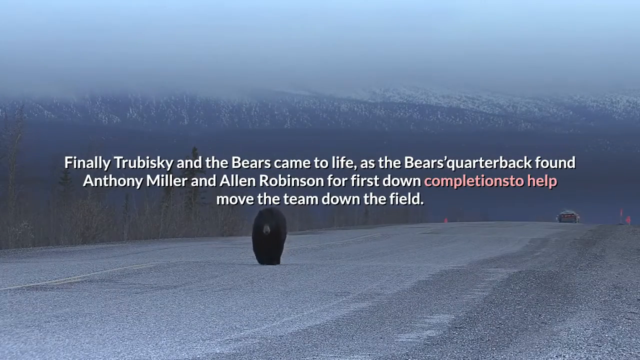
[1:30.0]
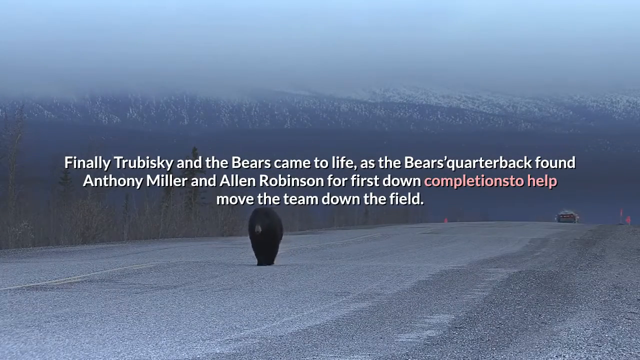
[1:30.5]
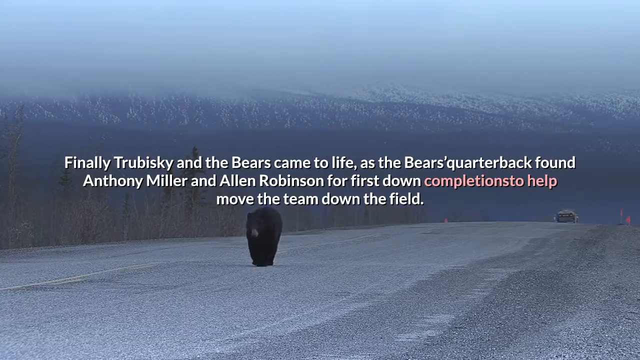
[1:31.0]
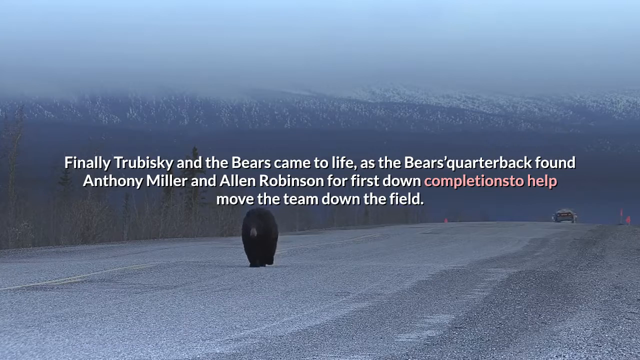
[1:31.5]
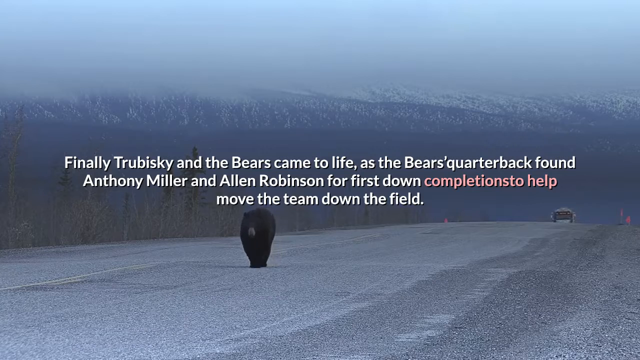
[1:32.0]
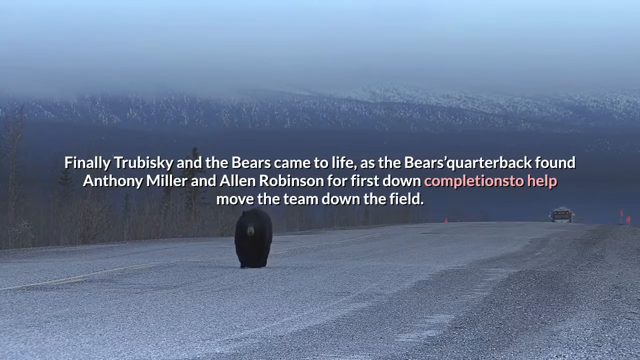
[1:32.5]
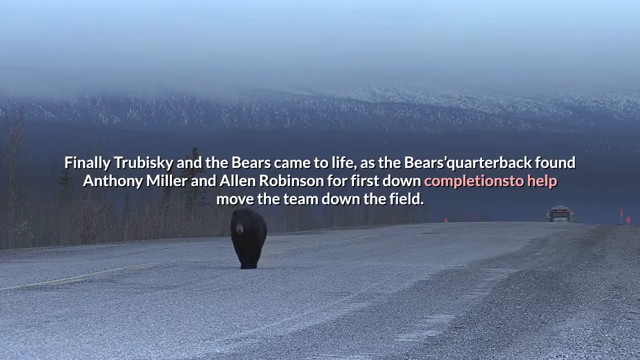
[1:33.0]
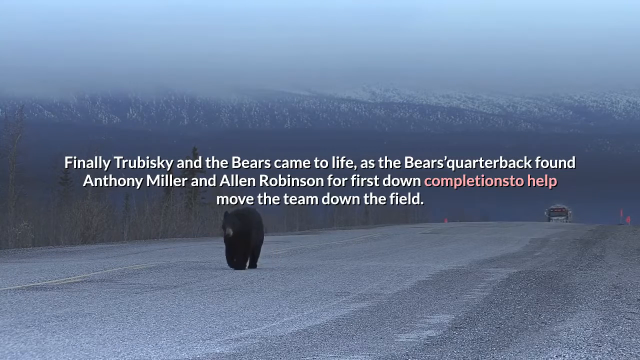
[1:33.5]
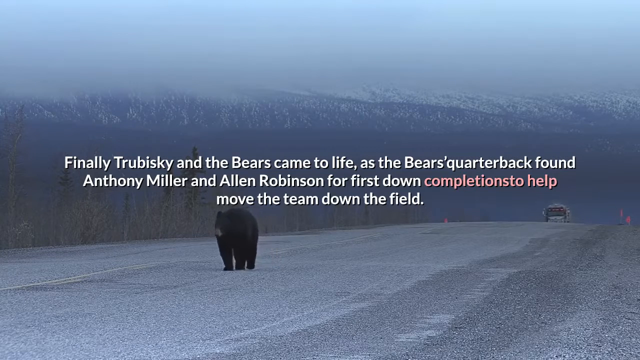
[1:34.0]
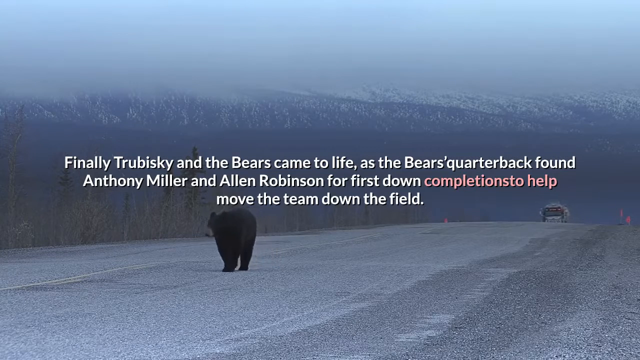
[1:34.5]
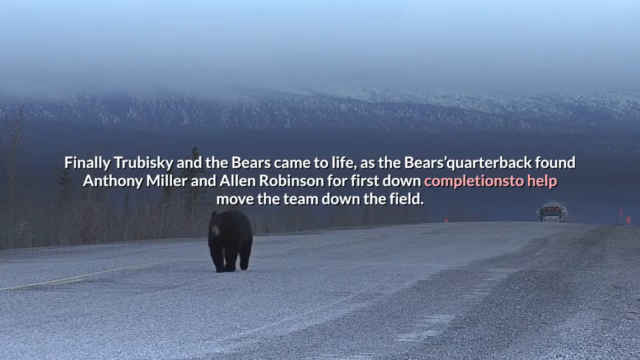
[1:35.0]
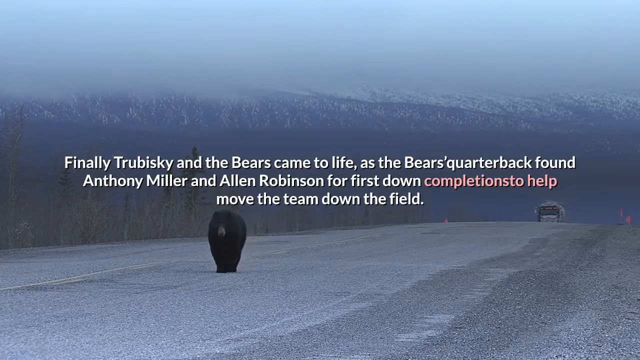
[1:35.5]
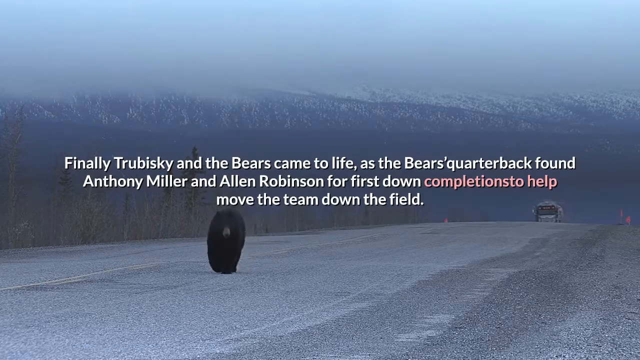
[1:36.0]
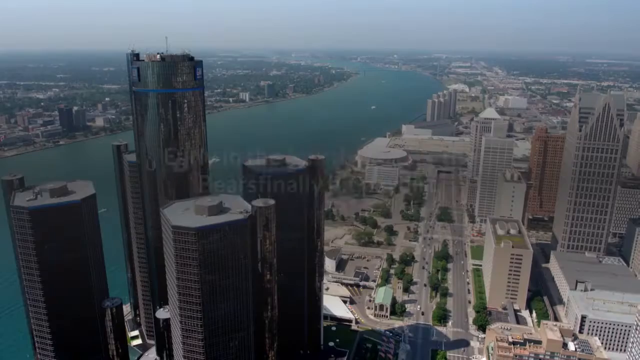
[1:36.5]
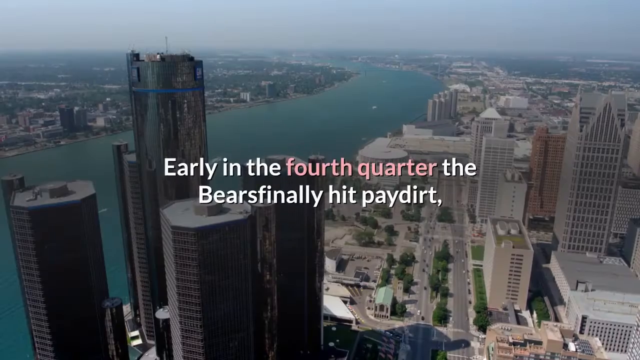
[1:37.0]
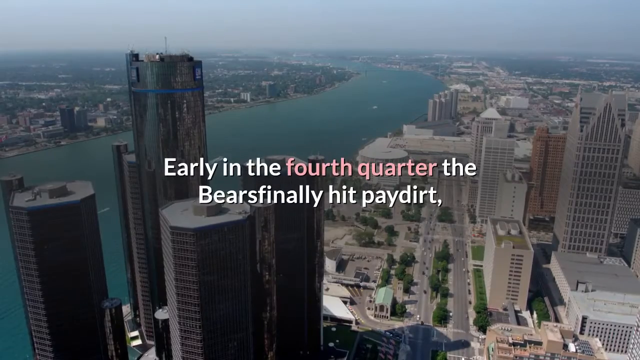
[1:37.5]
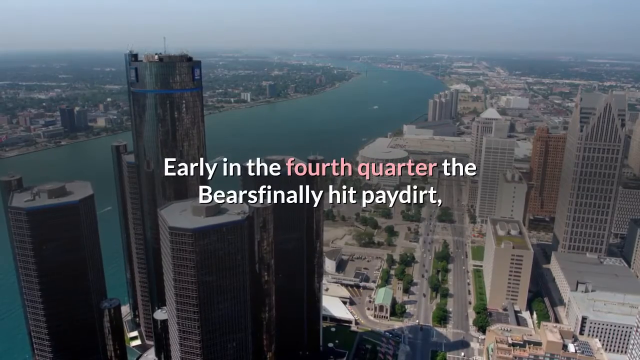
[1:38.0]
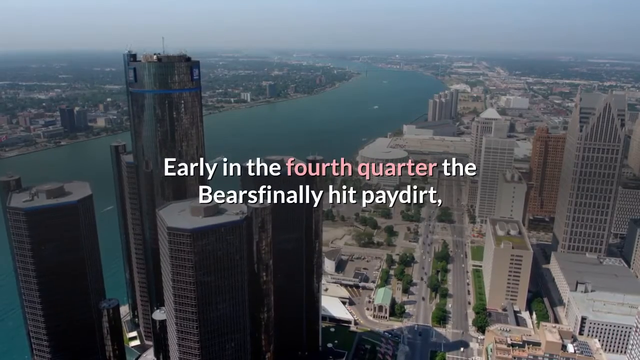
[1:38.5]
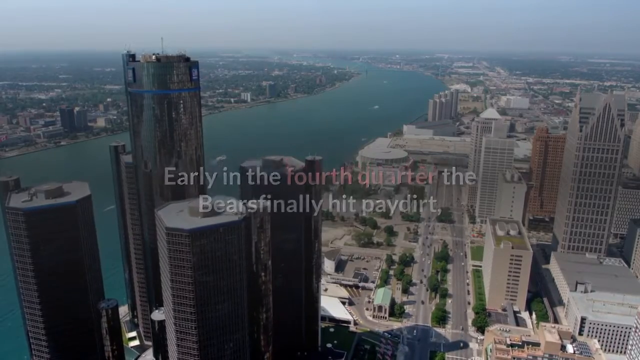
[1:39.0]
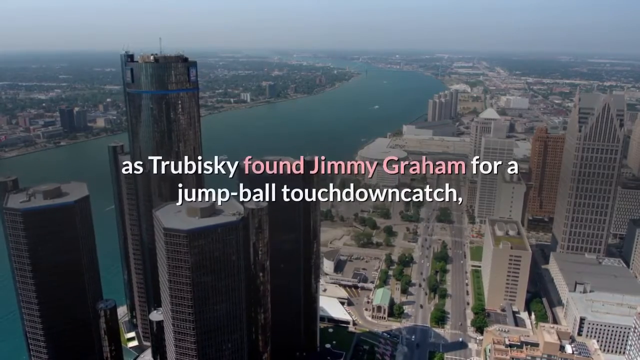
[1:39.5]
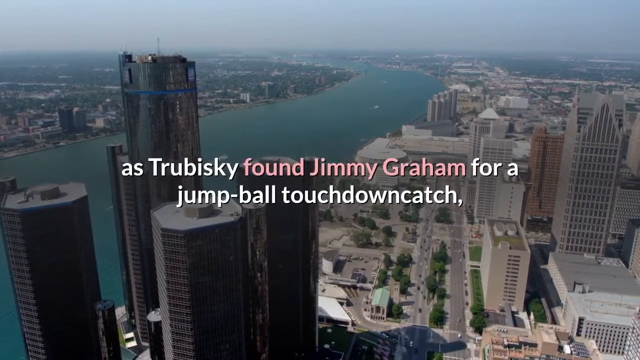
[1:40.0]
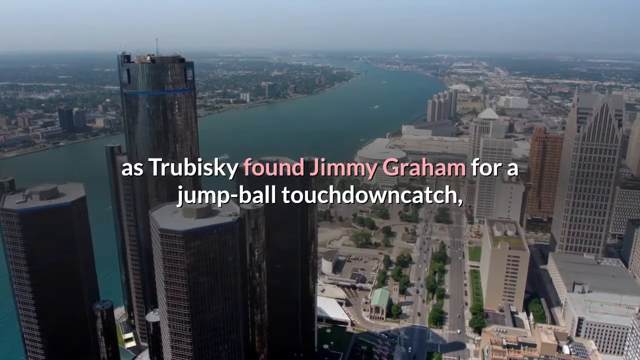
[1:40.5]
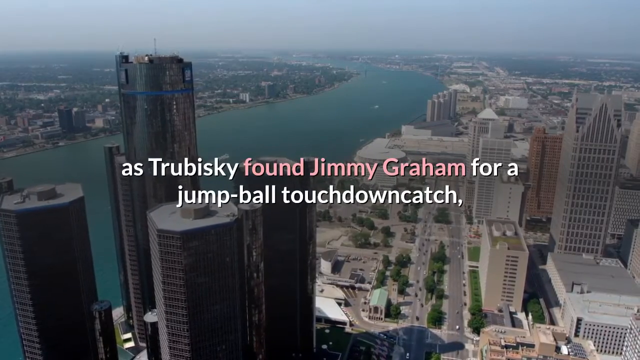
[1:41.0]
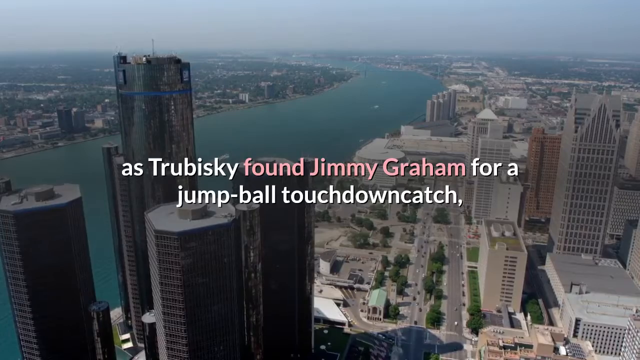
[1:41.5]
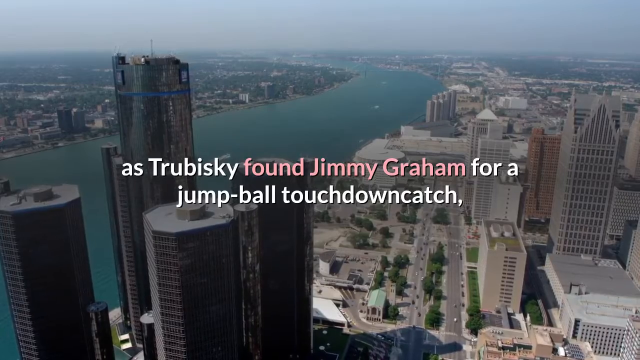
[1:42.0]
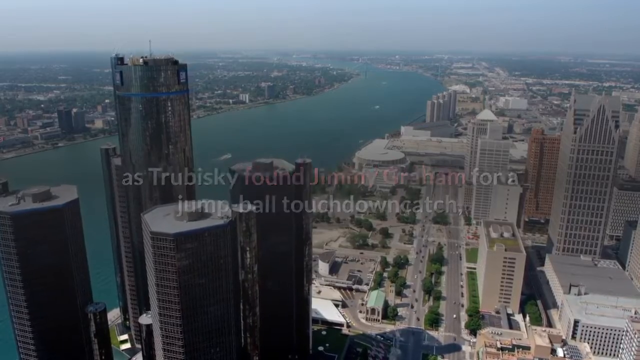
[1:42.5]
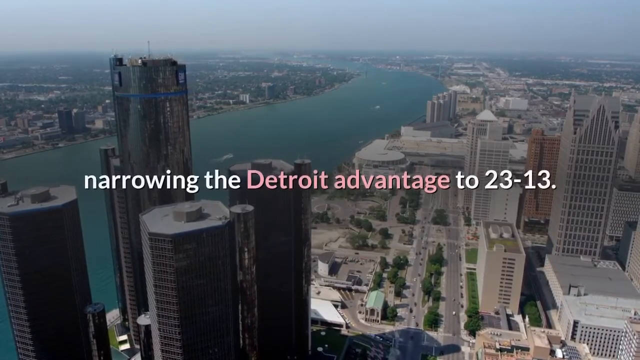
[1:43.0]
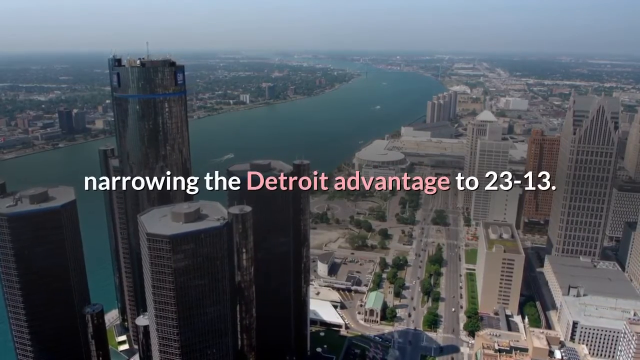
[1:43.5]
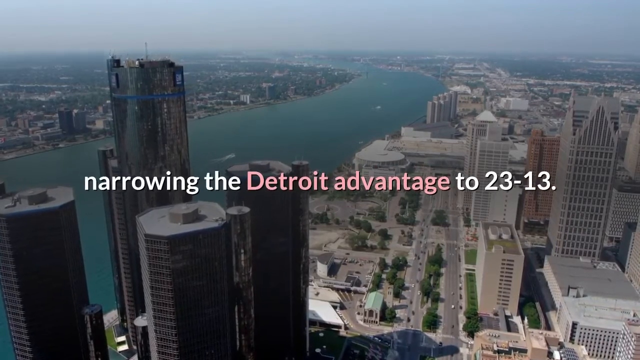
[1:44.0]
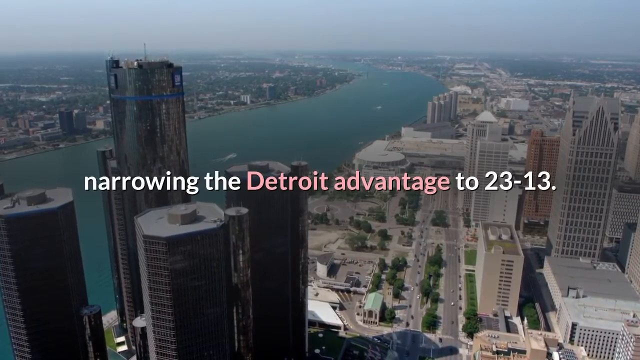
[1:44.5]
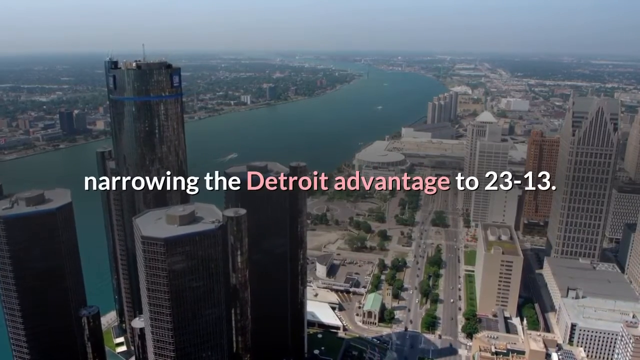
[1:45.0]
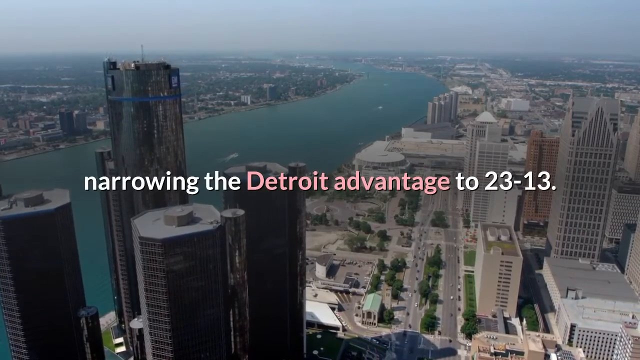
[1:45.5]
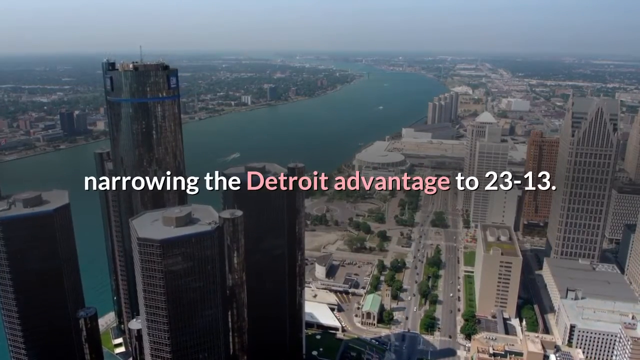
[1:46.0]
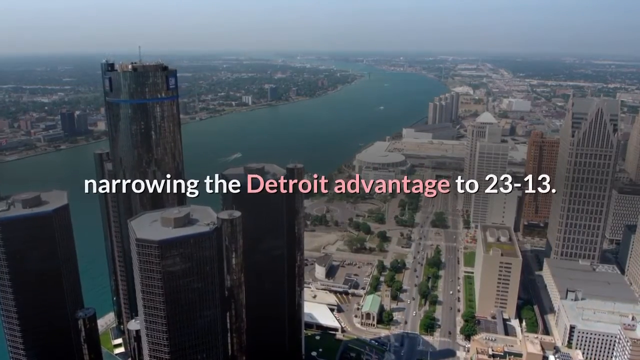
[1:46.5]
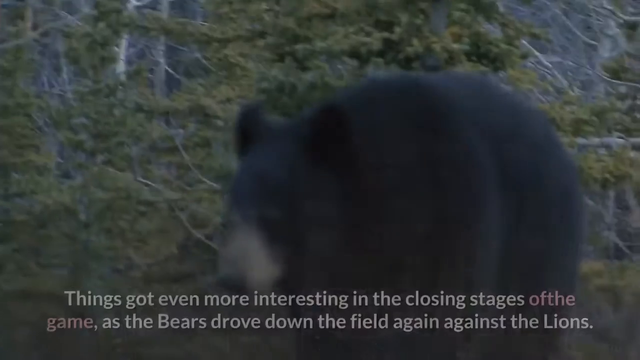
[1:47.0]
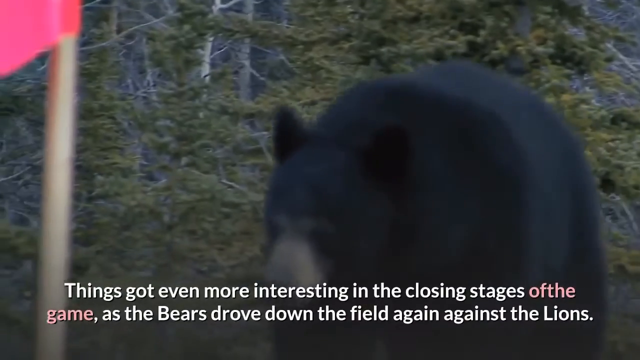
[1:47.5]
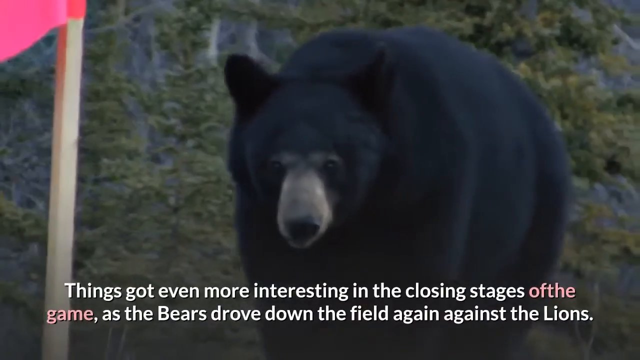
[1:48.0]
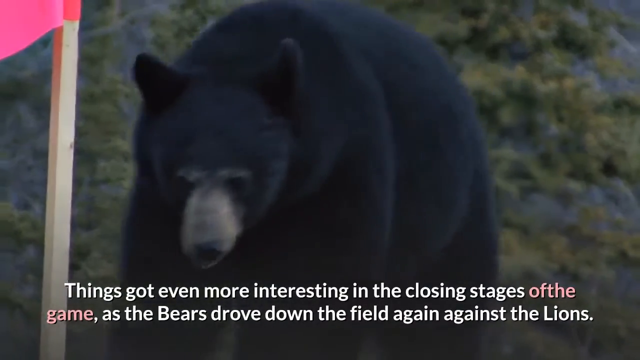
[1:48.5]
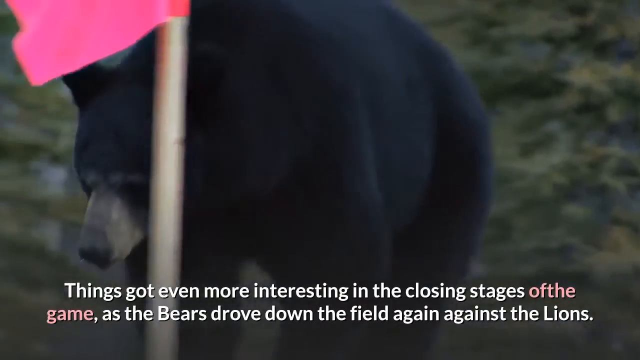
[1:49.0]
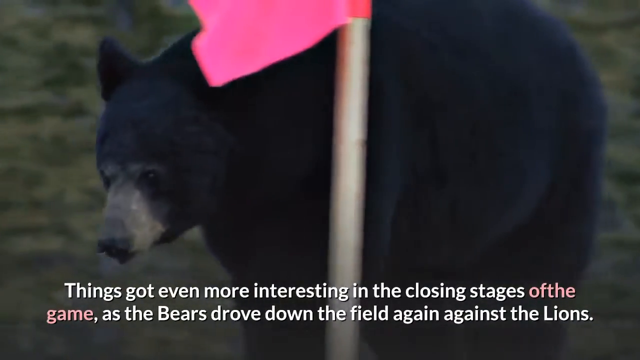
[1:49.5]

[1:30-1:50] The bear walks on the road as the bus approaches from behind. The next screen shows a top view of a city with a lake and tall skyscrapers; the huge lake separates two cities that have greener areas, and the sky in the distance looks quite misty. Text reads "Early in the fourth quarter, the Bears finally hit payday" and mentions a pass to Jimmy Graham "for a jump ball touchdown catch, narrowing the Detroit advantage." Next, the bear is shown in close-up in an area that seems kind of lit. Its path passes a small wooden post with a pink flag as text at the bottom reads "Things got even more interesting in the closing stages of the game."